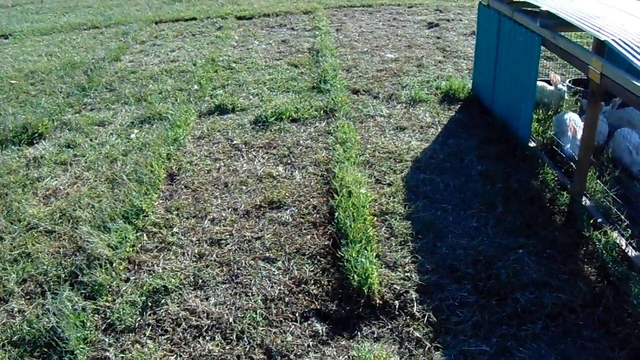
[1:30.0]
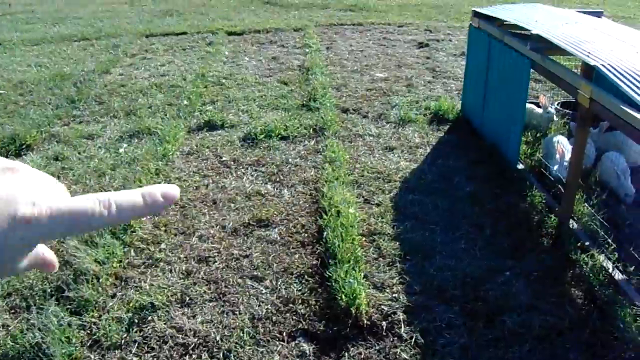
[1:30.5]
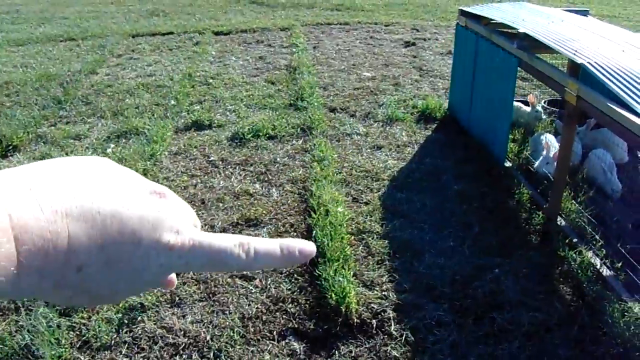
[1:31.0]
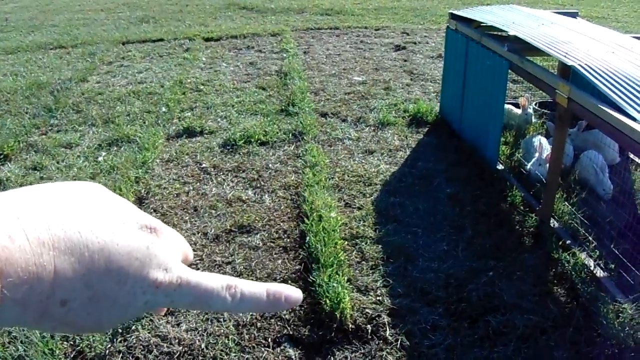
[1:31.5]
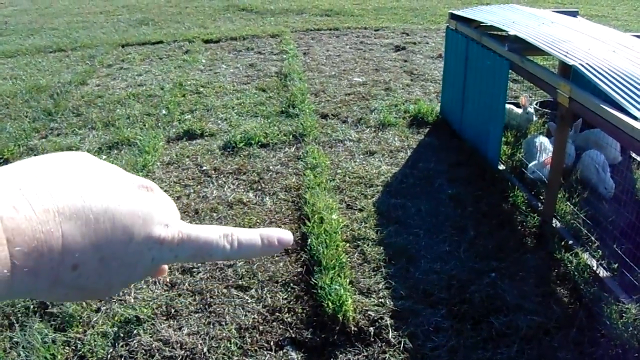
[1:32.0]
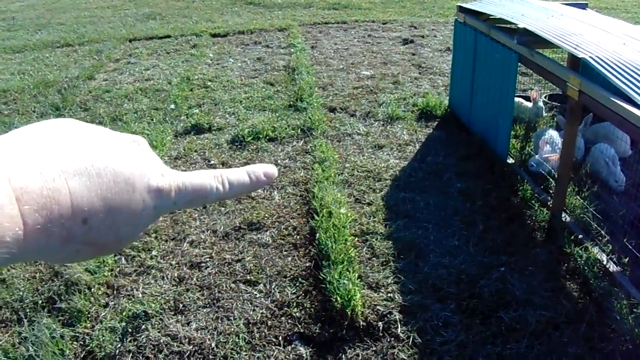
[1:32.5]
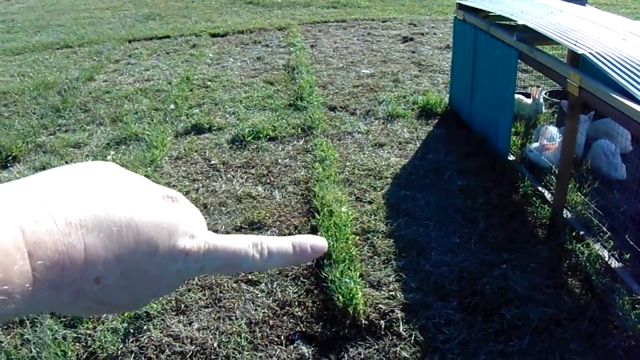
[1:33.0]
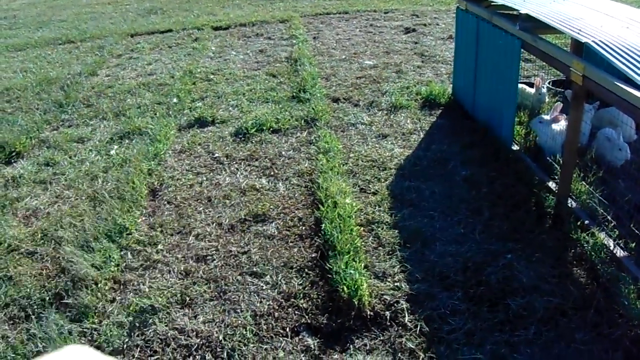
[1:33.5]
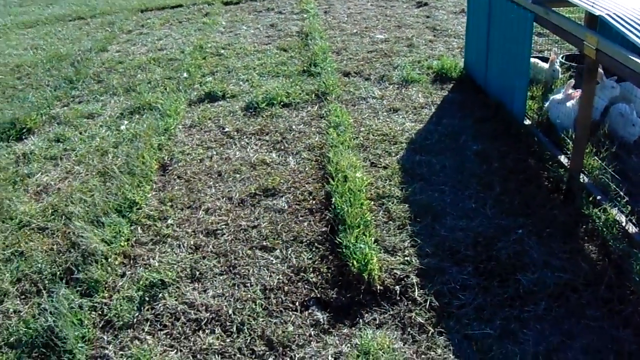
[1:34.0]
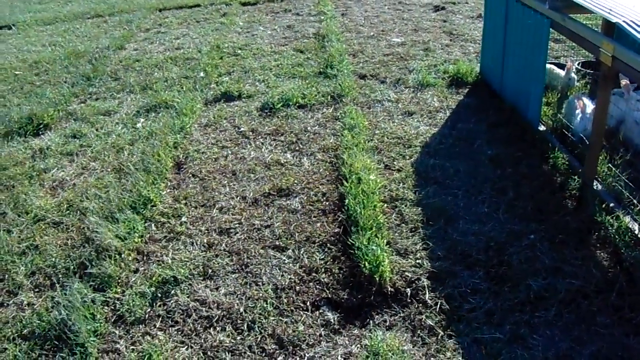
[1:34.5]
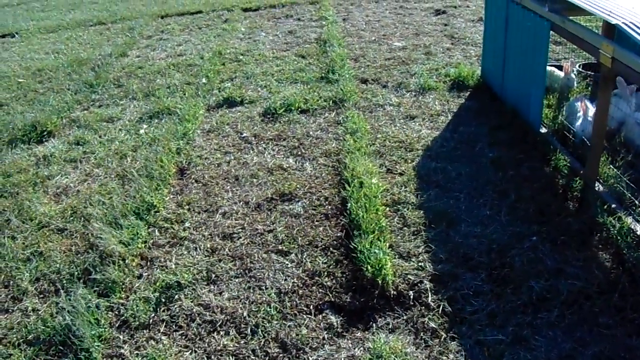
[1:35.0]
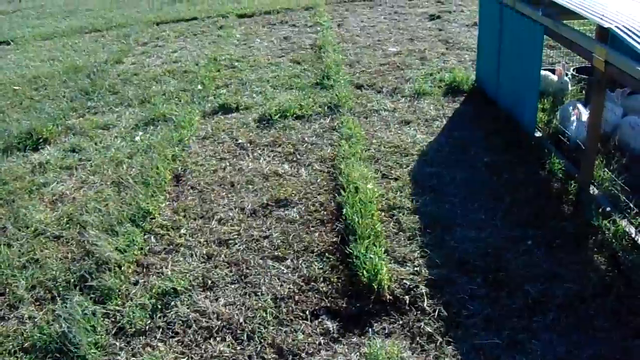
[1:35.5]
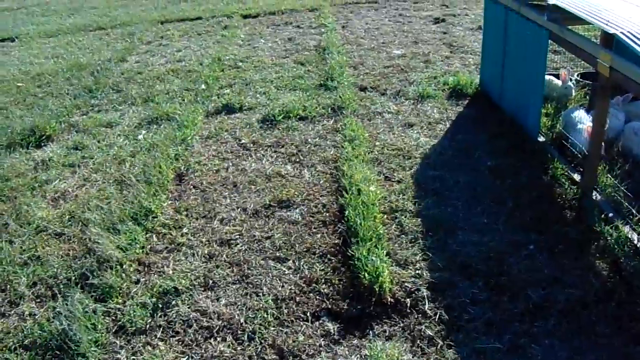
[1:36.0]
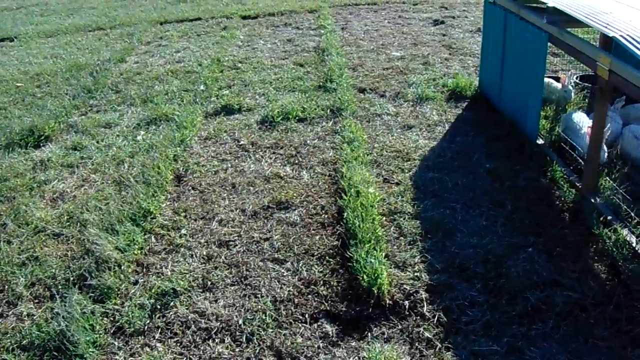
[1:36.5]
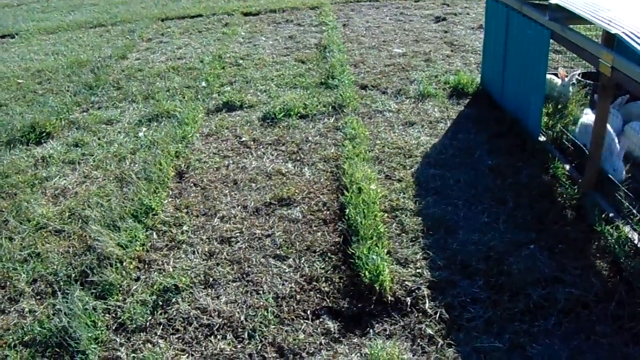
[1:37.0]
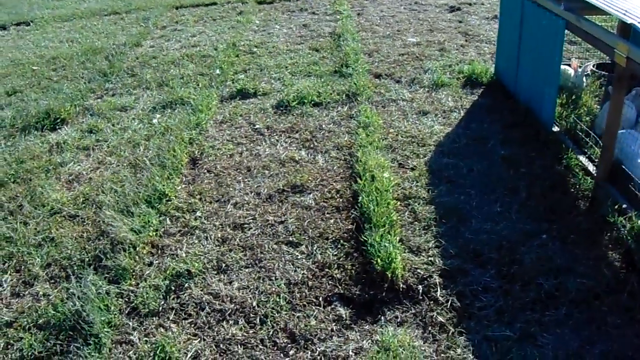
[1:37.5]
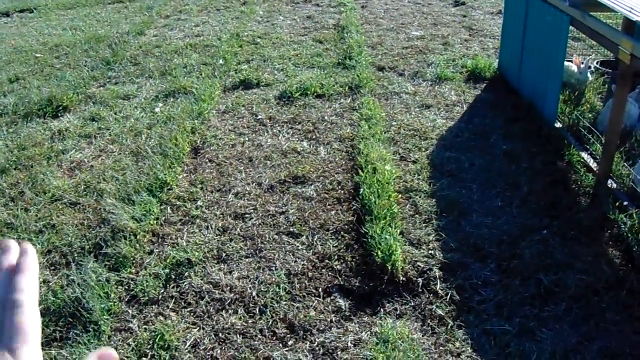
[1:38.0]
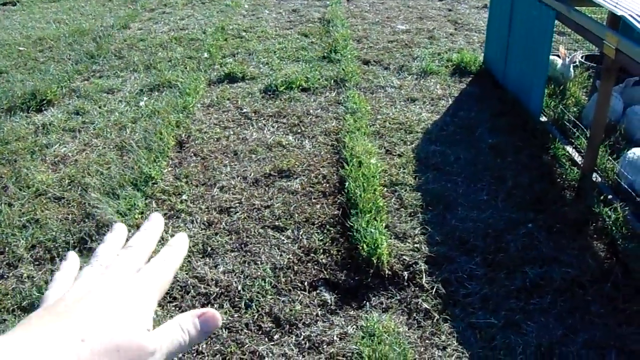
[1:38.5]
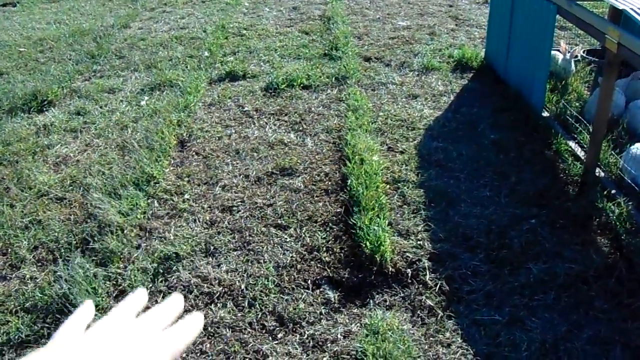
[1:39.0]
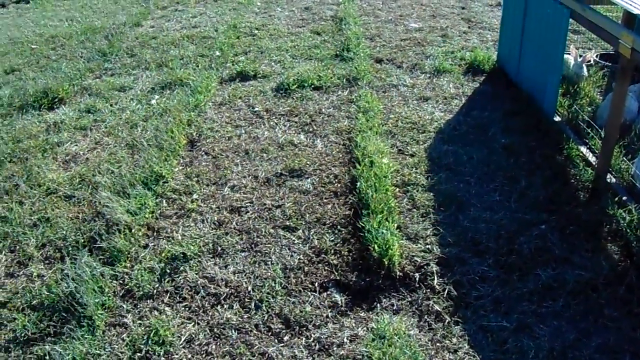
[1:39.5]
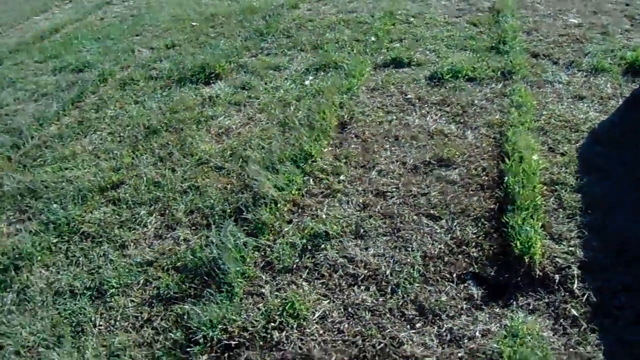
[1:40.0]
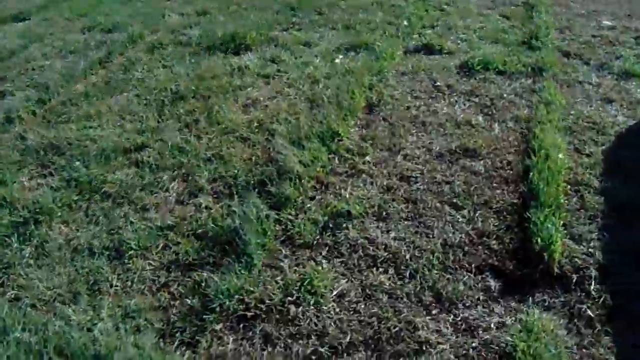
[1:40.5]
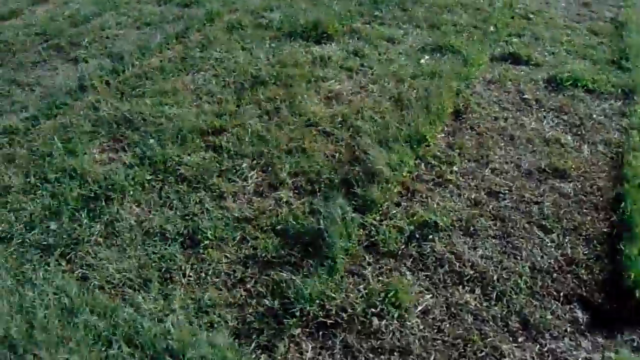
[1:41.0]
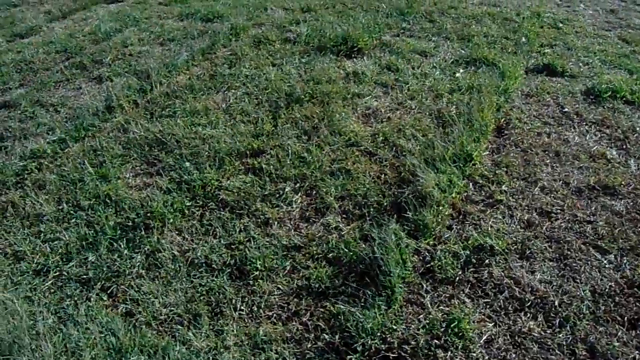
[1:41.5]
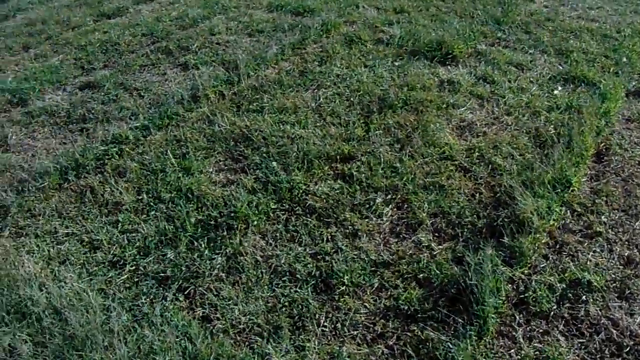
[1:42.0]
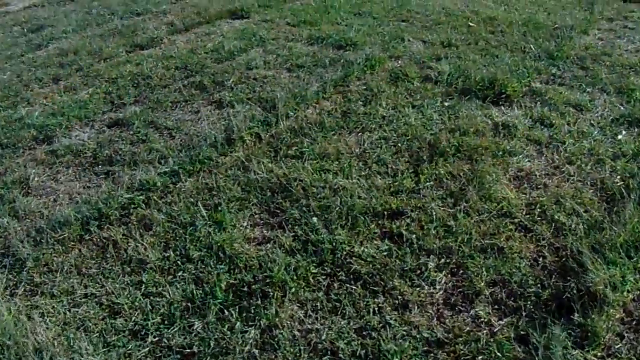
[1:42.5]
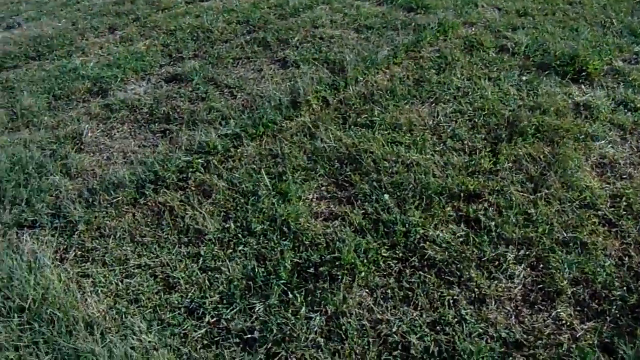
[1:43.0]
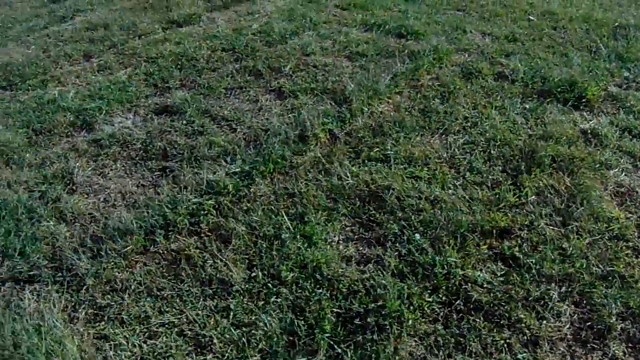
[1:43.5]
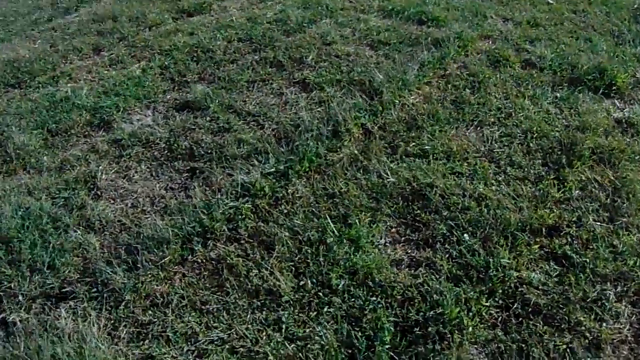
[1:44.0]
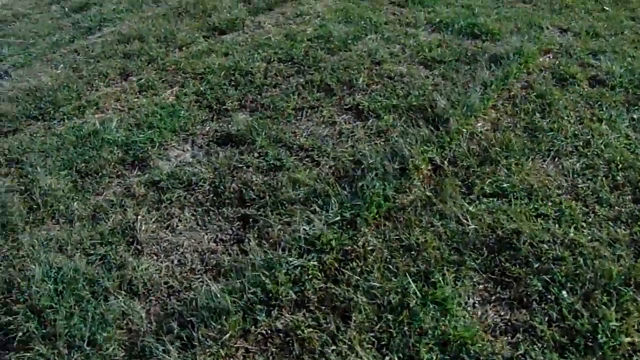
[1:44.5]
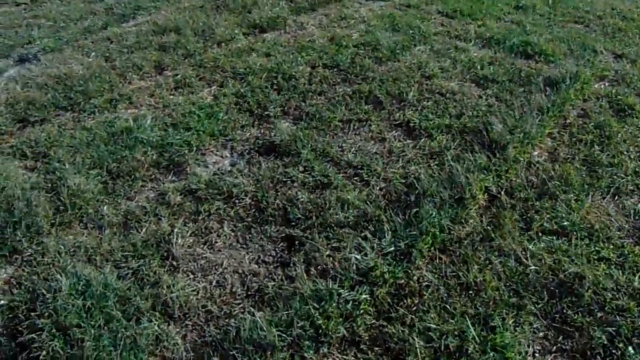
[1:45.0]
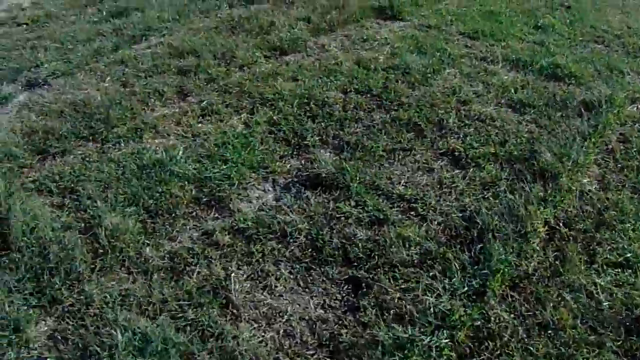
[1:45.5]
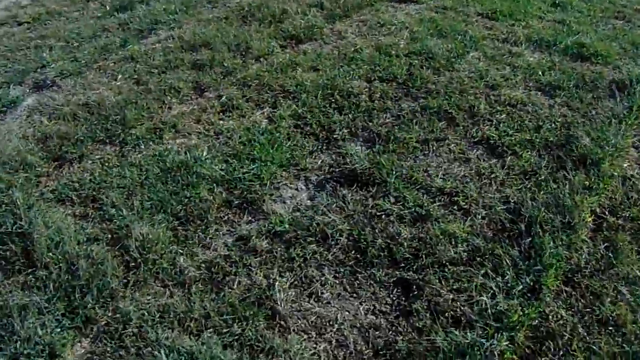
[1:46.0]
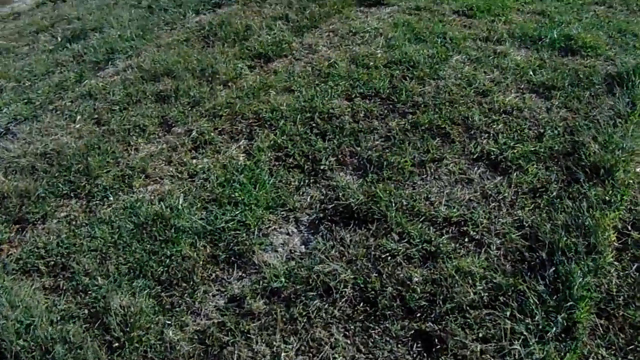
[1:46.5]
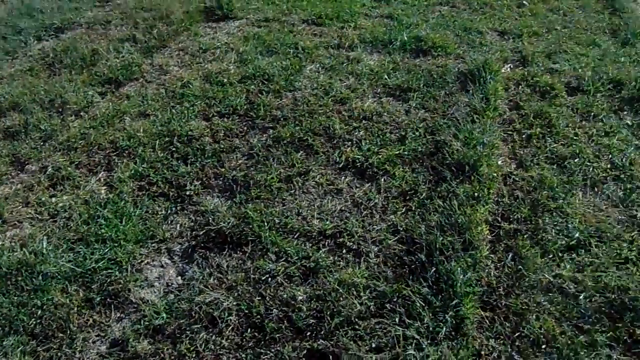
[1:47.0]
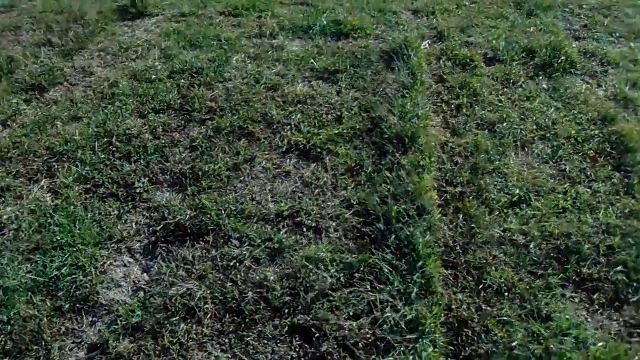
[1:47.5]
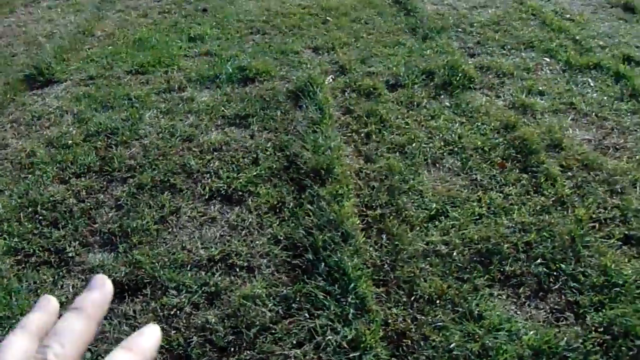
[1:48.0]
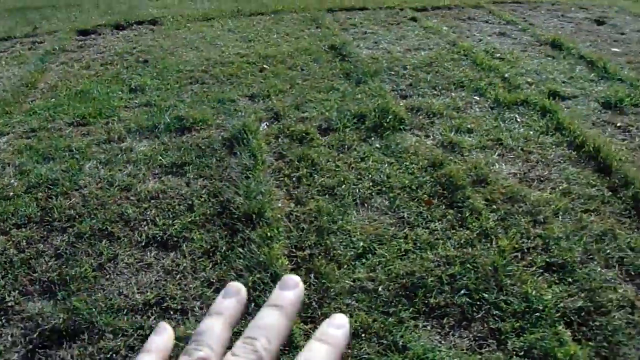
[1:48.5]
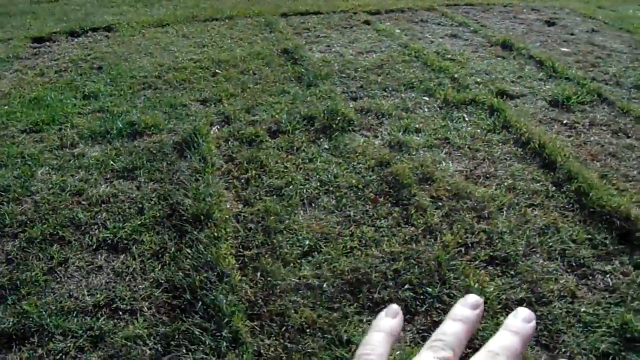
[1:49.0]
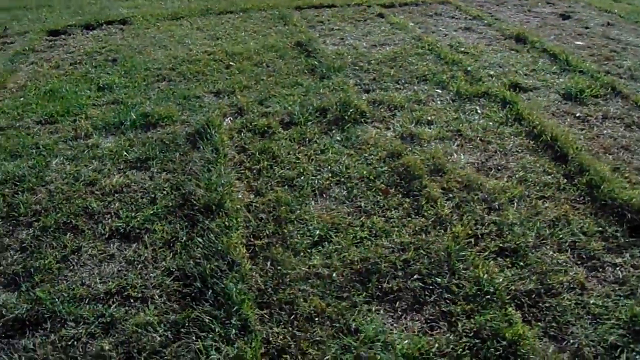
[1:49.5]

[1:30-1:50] The shot shows a piece of land, with a structure of iron and wood containing animals on the right side. At the start and in the following seconds, a very light-skinned human hand appears and moves in the lower left corner of the screen, pointing at spots on the ground next to the structure. Bands of grass are arranged regularly on the ground and seem to draw rectangular shapes. The cage, visible on the right at the start, is made of wooden beams positioned perpendicular to each other, with small golden rectangular plates at the intersection points, and light-colored iron panels. White rabbits move on the lawn inside it.